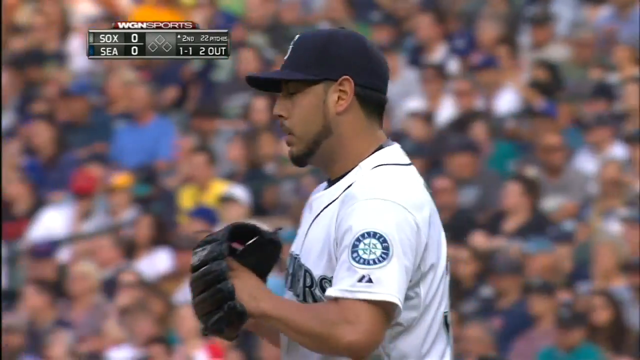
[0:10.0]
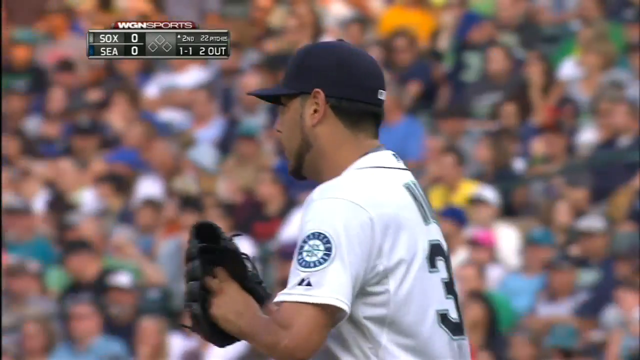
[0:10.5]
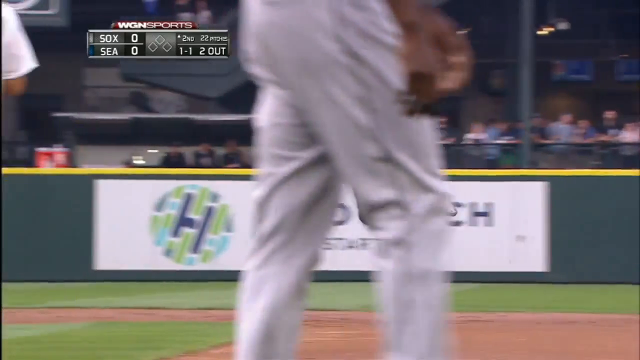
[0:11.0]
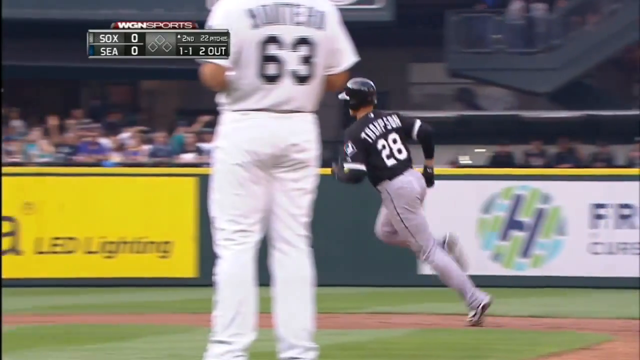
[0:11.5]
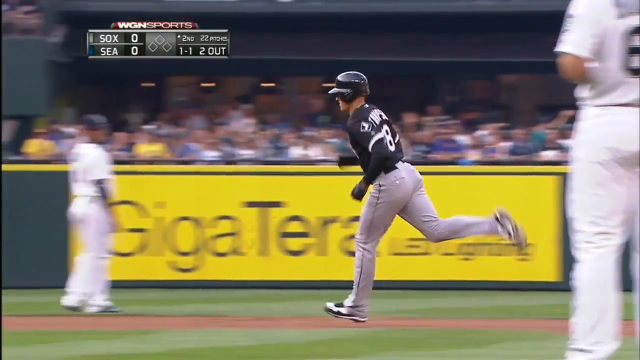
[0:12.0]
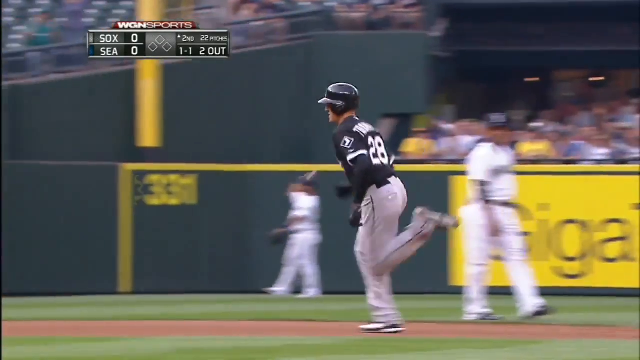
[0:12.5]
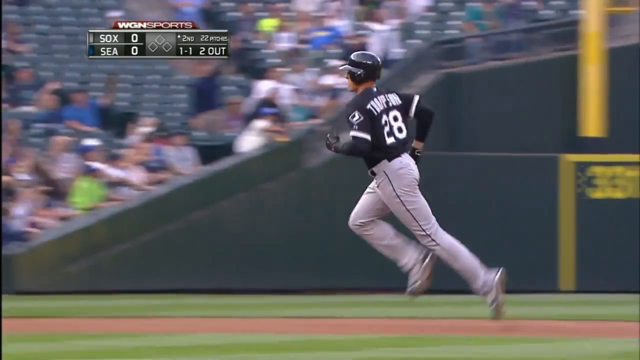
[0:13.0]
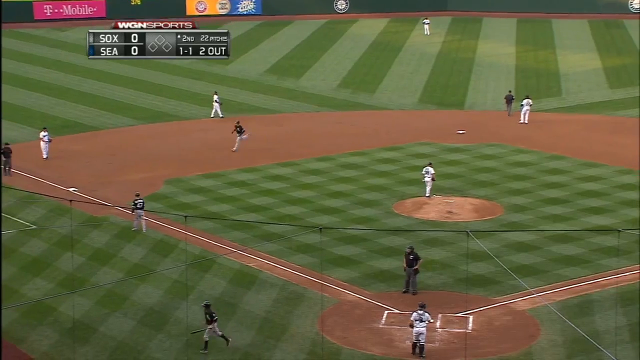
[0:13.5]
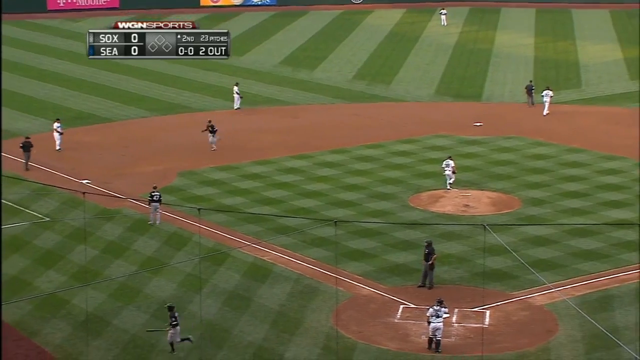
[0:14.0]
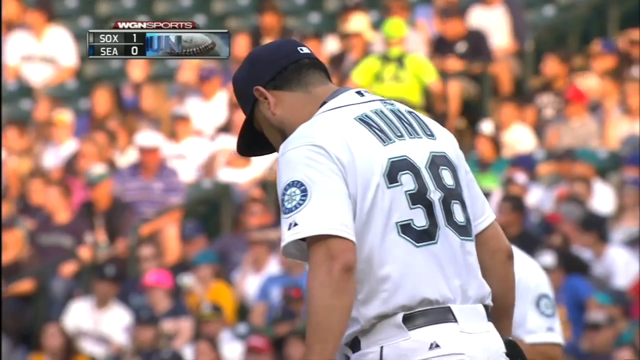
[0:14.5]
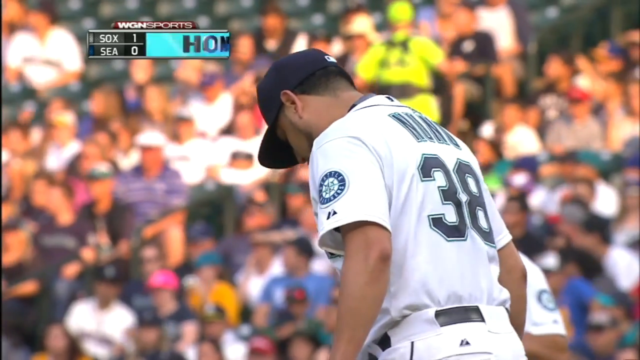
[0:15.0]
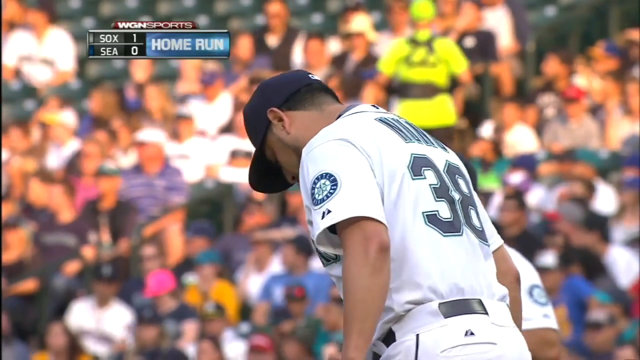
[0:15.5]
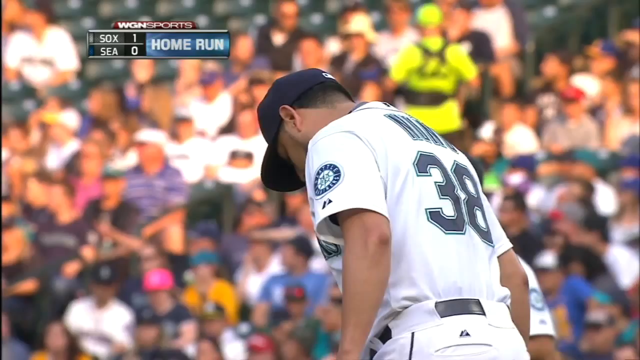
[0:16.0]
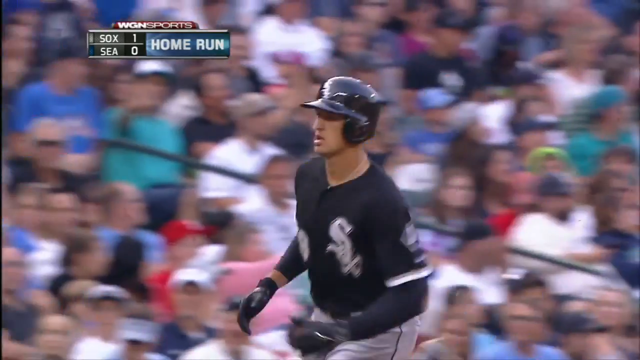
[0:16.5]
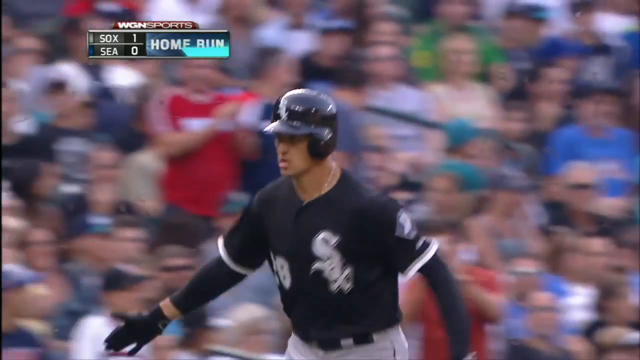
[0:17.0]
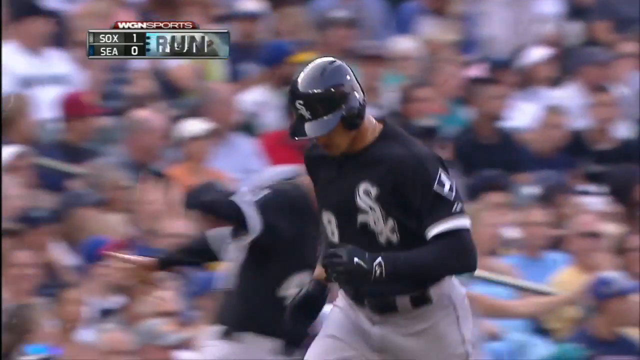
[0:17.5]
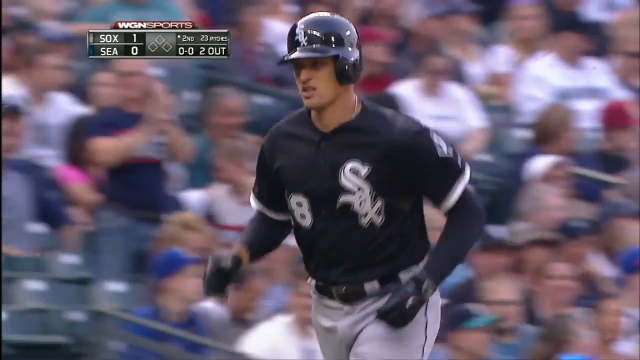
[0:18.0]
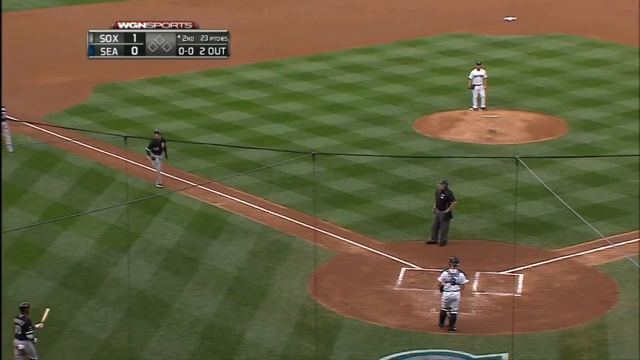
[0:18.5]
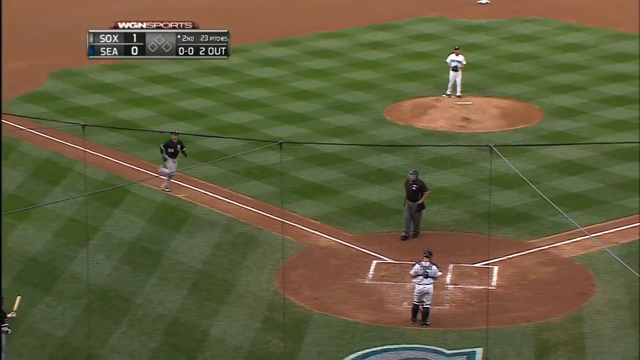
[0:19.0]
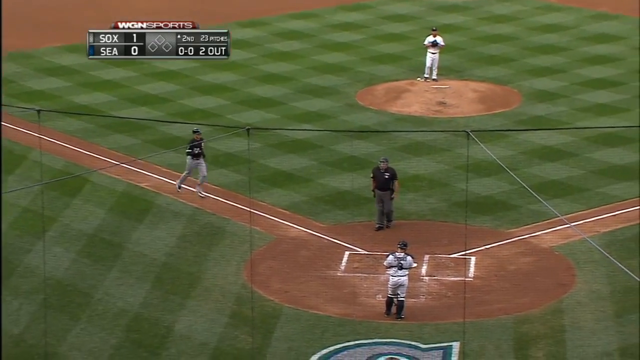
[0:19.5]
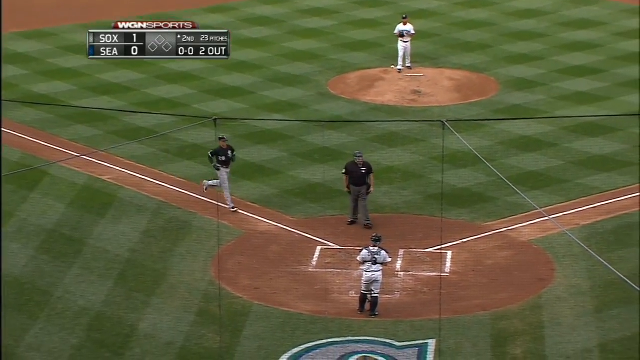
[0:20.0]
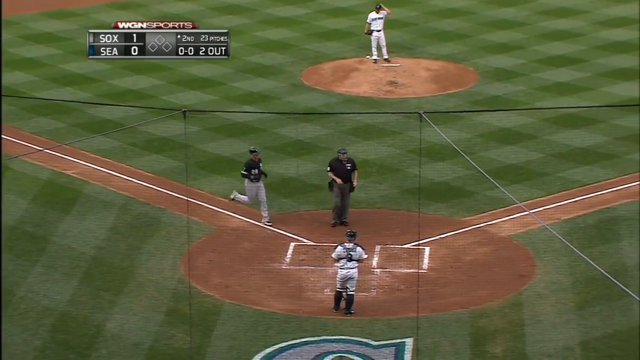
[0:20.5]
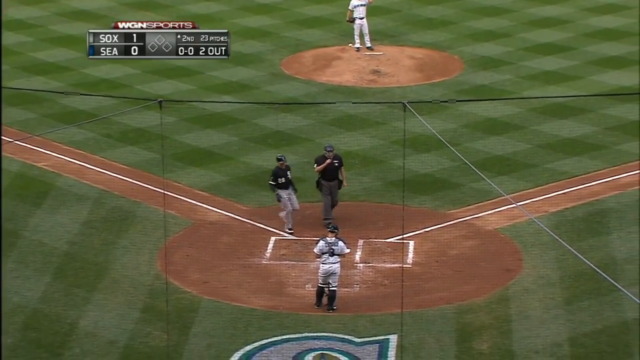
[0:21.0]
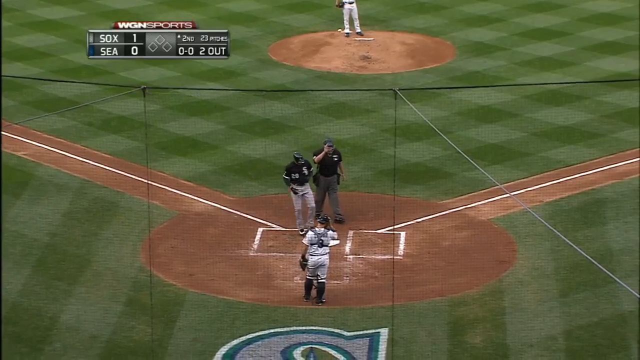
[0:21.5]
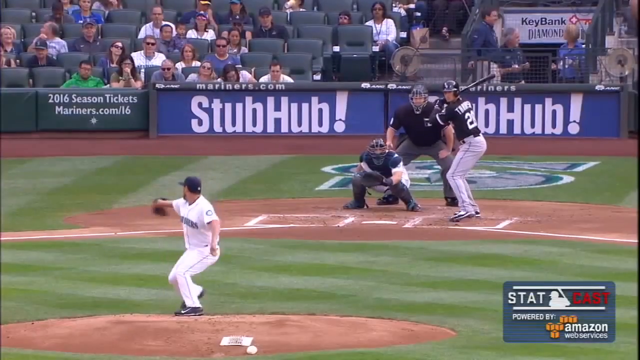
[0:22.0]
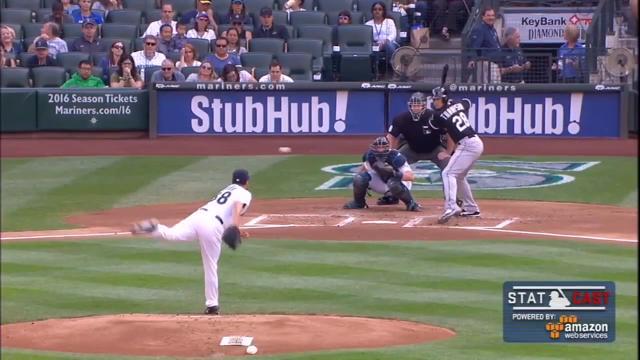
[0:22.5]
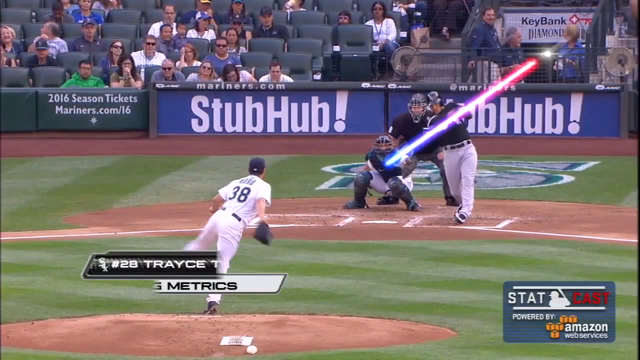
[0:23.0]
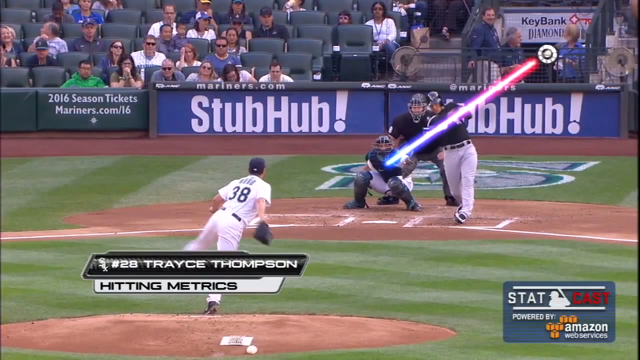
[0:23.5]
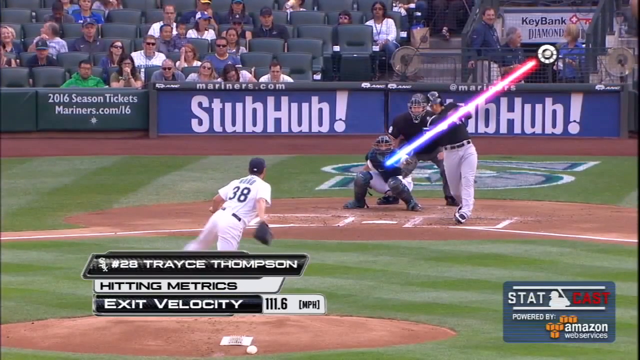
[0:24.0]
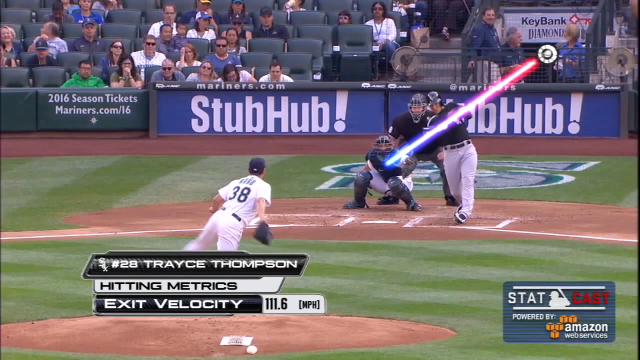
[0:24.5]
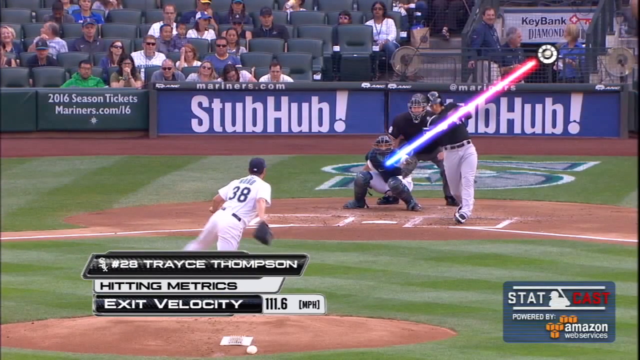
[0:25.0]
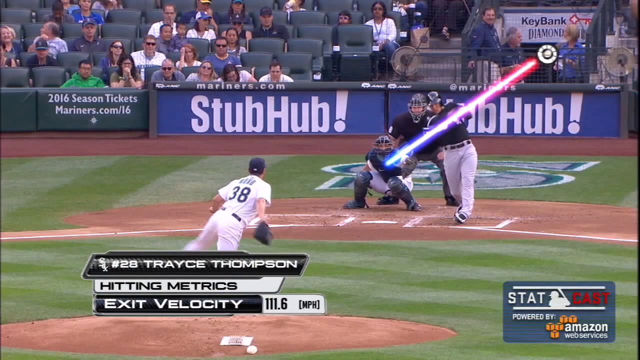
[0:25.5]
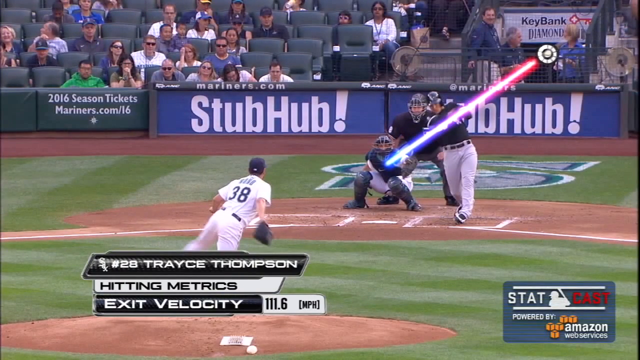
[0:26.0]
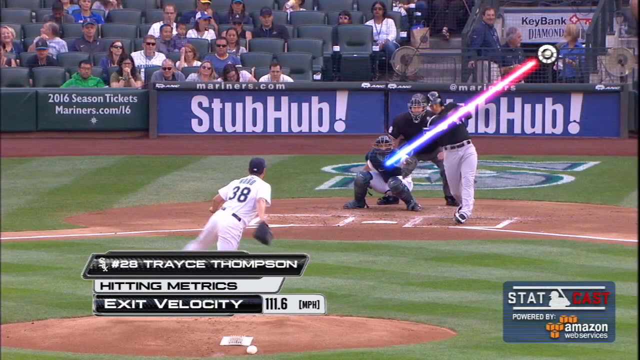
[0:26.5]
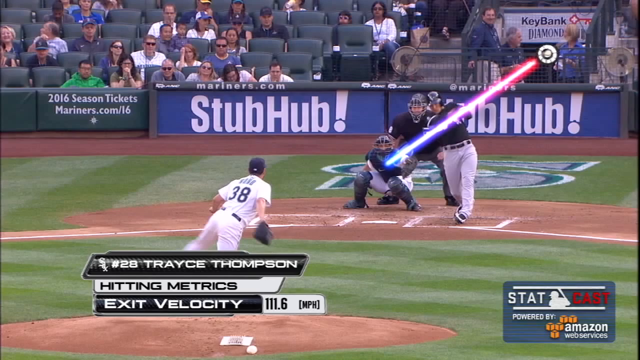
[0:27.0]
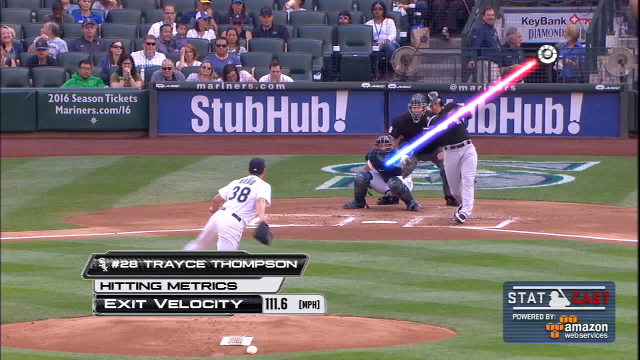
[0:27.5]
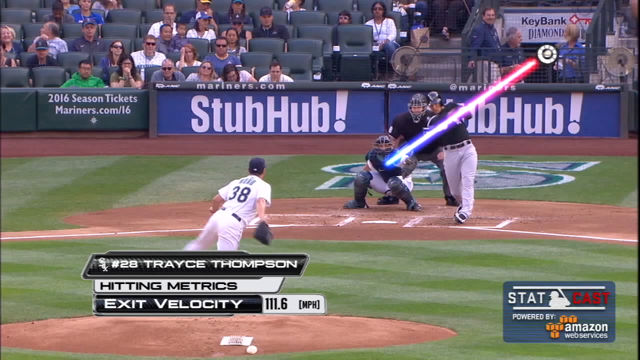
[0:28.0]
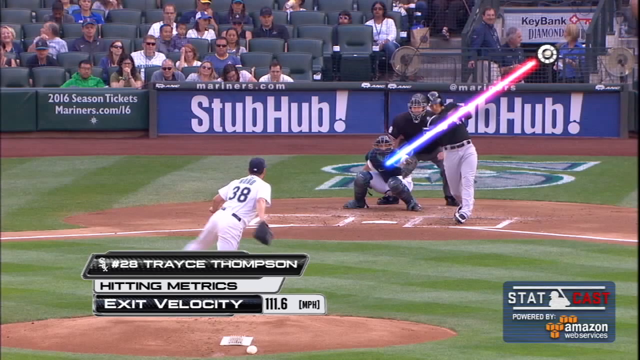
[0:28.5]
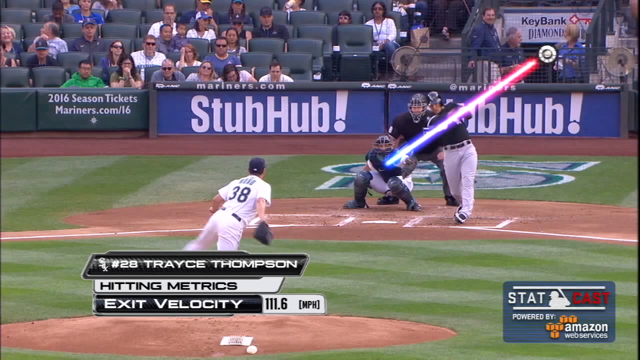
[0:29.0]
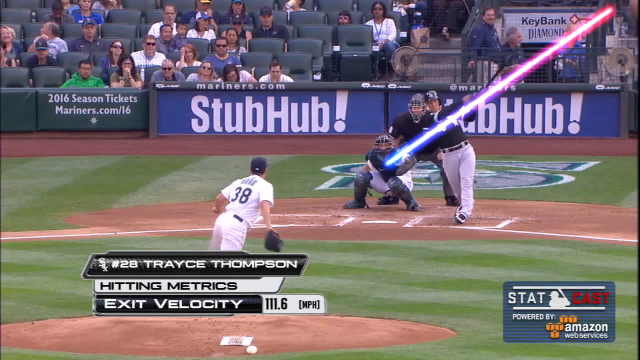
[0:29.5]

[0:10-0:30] At the start, the pitcher watches as a baseball player runs around the bases. The runner passes second, then third, slaps hands with the coach at third base, and comes home. A crowd is visible in the background as he runs, and the people in the stands are not clapping. The game is between the Sox and the Seattle Mariners. In the background "Mariners.com" is visible, along with the score, 0-0, and two outs. The pitcher wears white with a blue cap, and the batter wears a blue top and gray pants. The hitter's name is shown as Trayce Thompson. Afterward, a replay shows the pitch that the man hit for the home run.